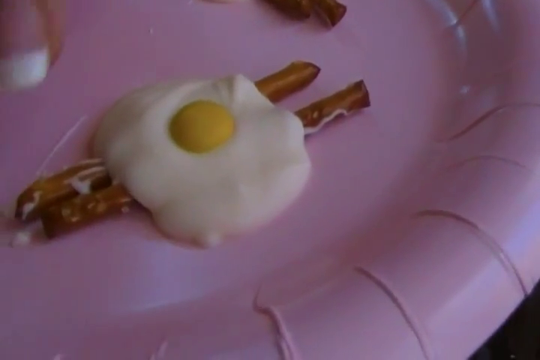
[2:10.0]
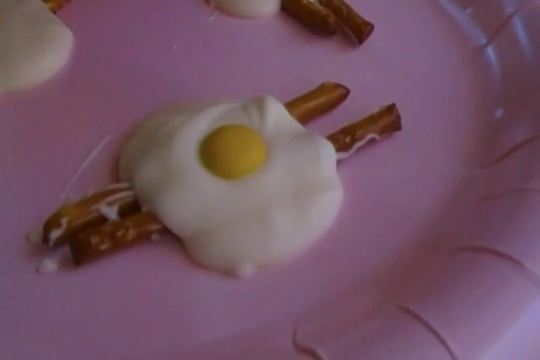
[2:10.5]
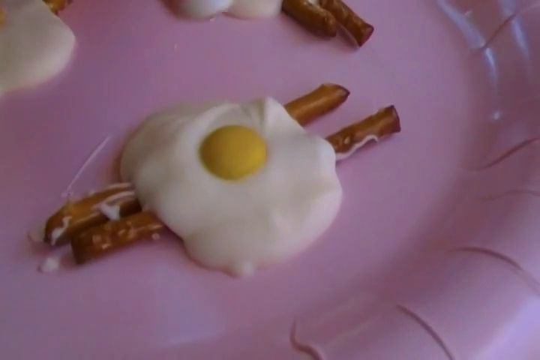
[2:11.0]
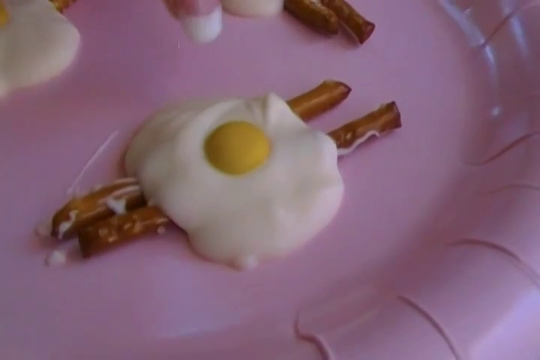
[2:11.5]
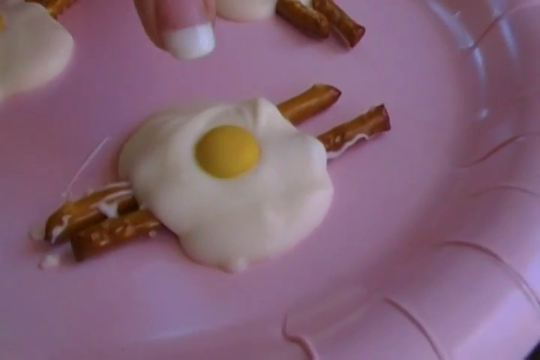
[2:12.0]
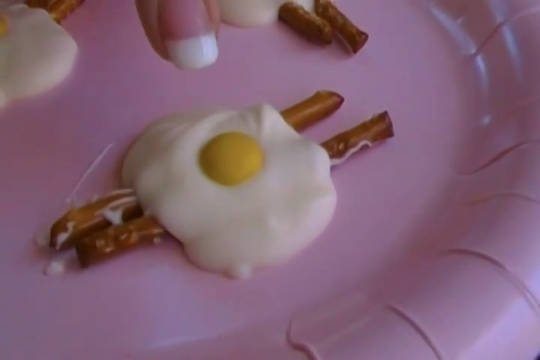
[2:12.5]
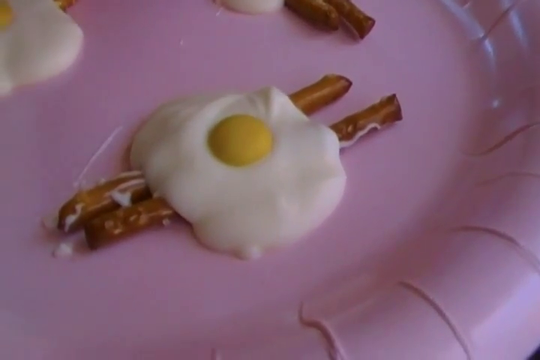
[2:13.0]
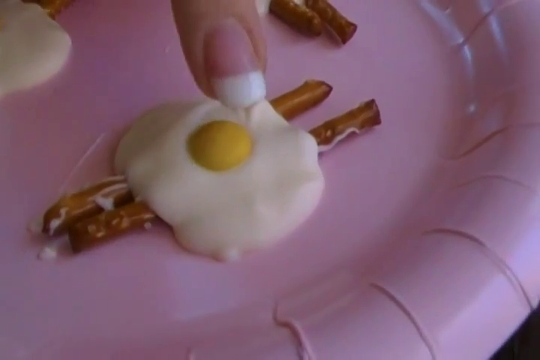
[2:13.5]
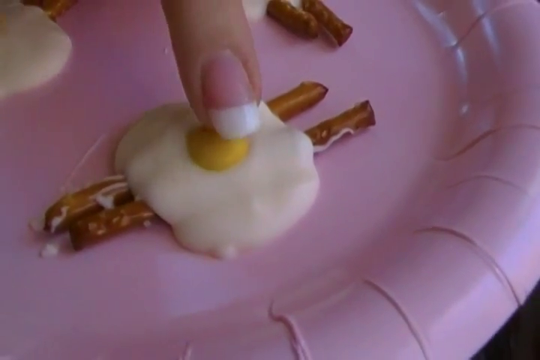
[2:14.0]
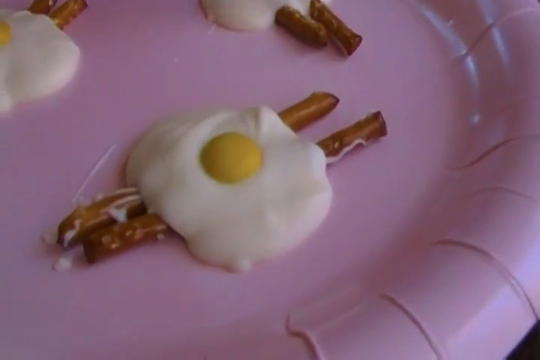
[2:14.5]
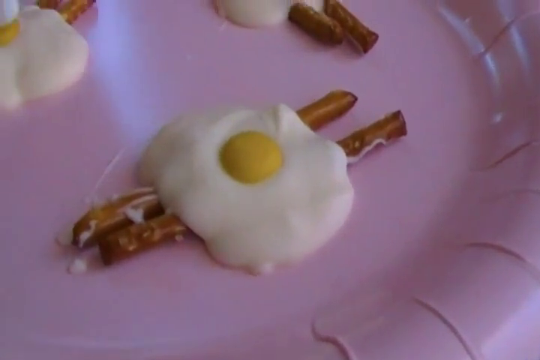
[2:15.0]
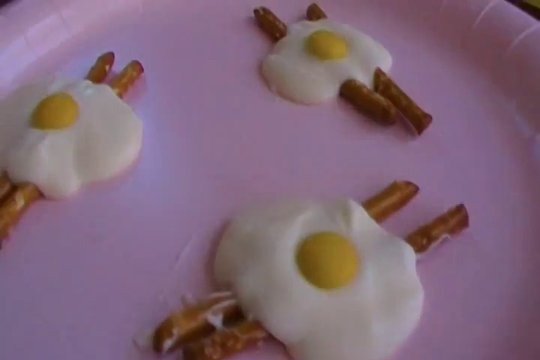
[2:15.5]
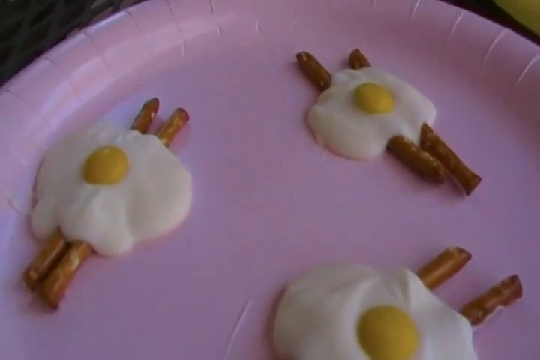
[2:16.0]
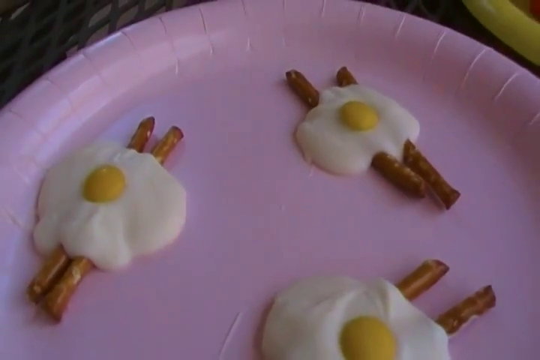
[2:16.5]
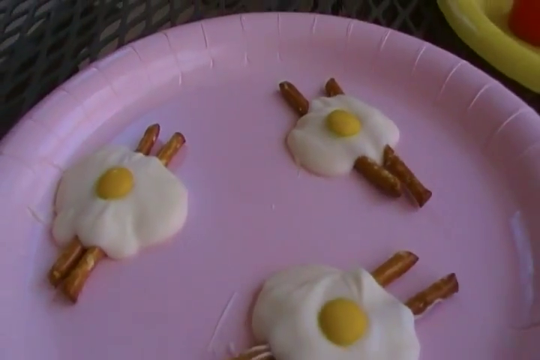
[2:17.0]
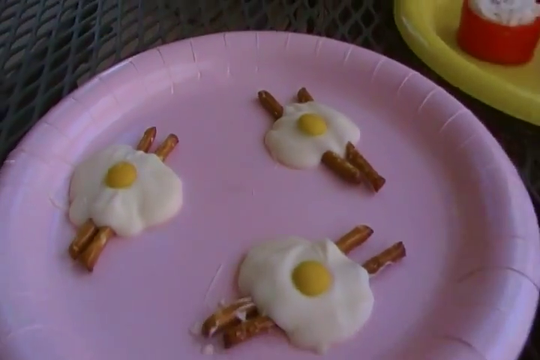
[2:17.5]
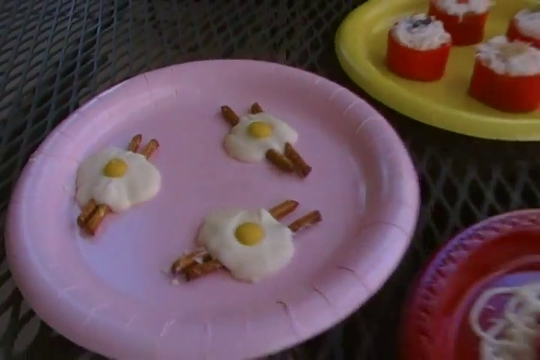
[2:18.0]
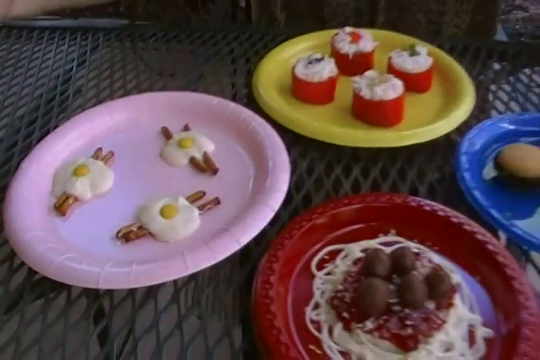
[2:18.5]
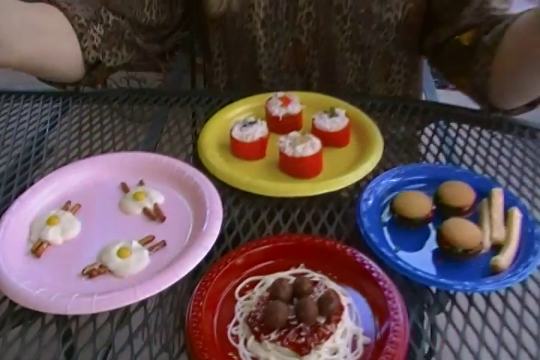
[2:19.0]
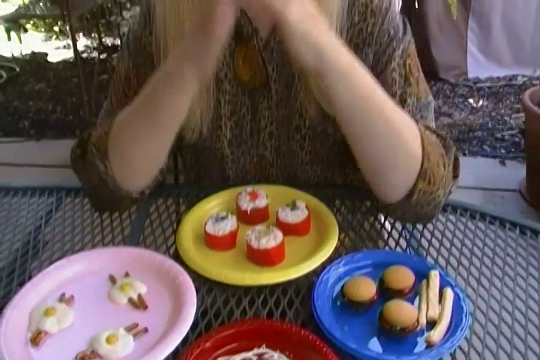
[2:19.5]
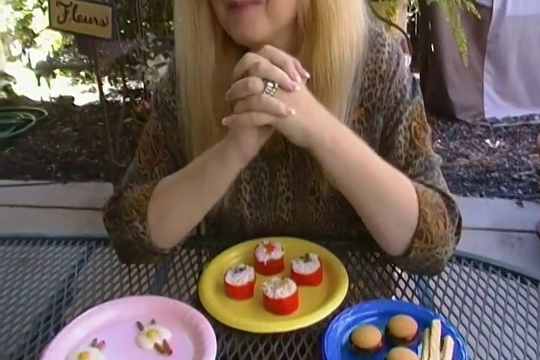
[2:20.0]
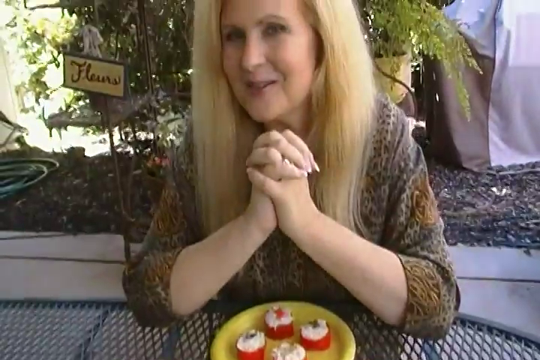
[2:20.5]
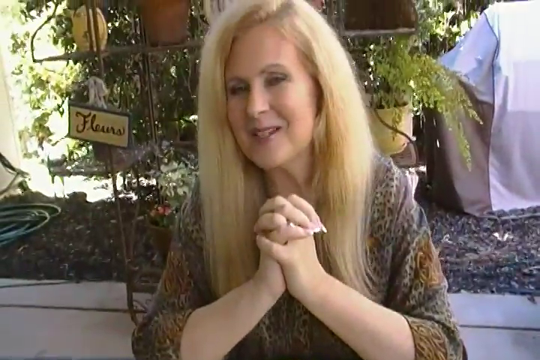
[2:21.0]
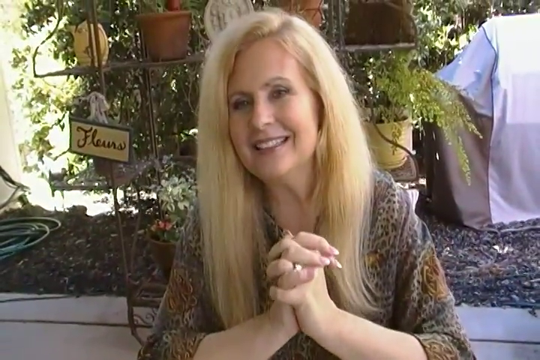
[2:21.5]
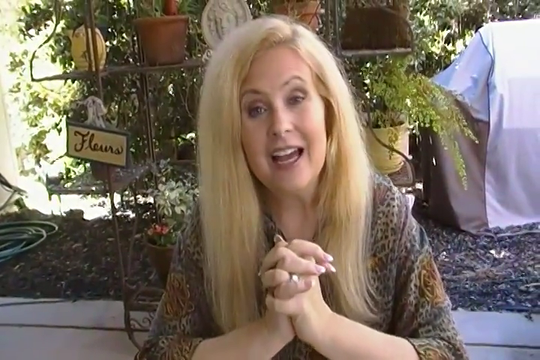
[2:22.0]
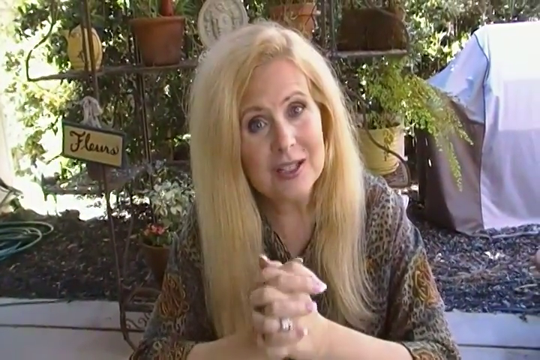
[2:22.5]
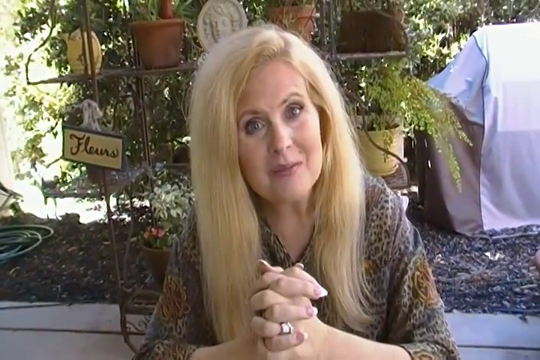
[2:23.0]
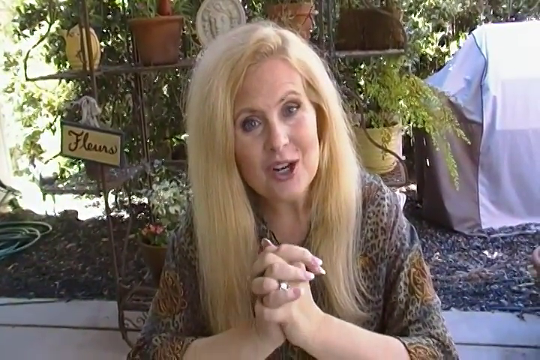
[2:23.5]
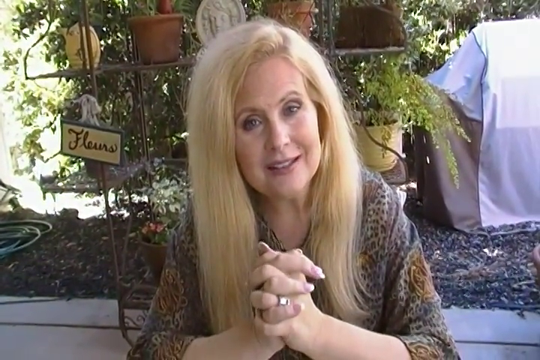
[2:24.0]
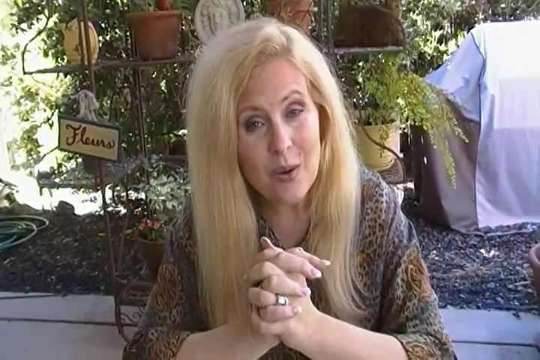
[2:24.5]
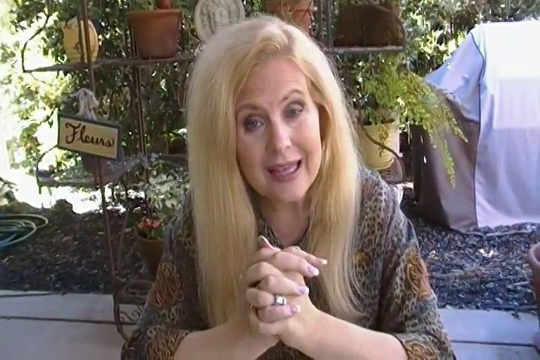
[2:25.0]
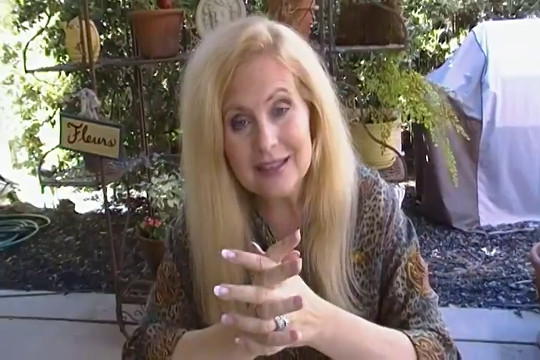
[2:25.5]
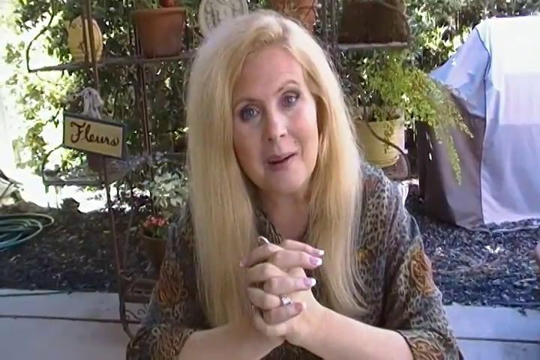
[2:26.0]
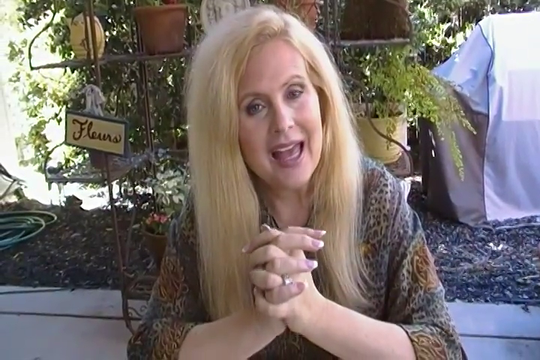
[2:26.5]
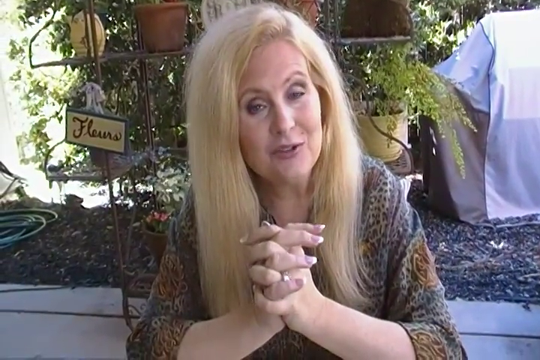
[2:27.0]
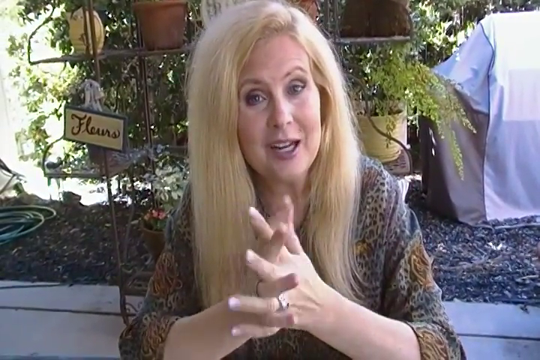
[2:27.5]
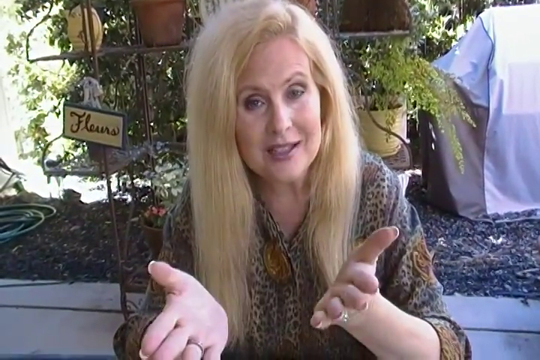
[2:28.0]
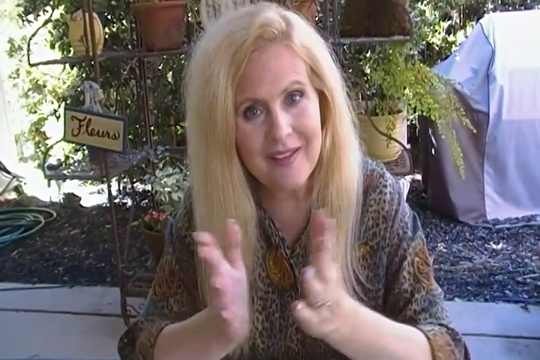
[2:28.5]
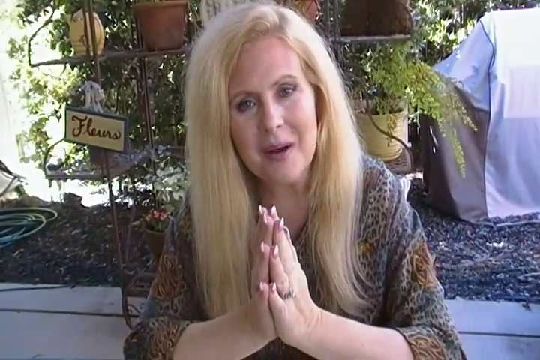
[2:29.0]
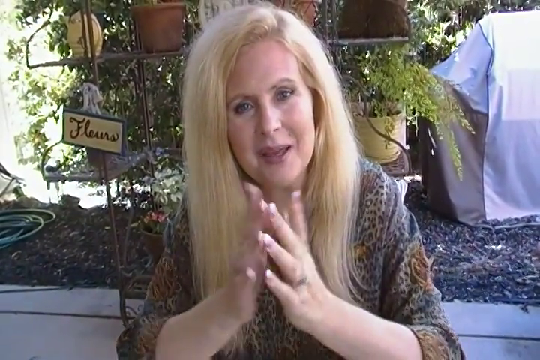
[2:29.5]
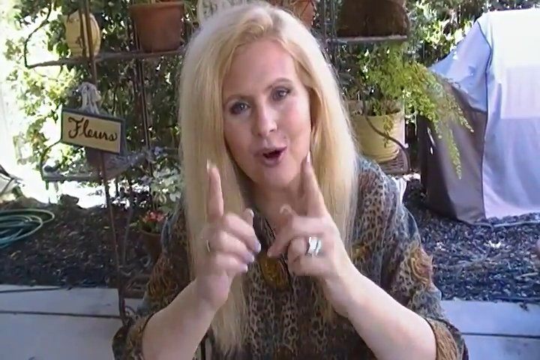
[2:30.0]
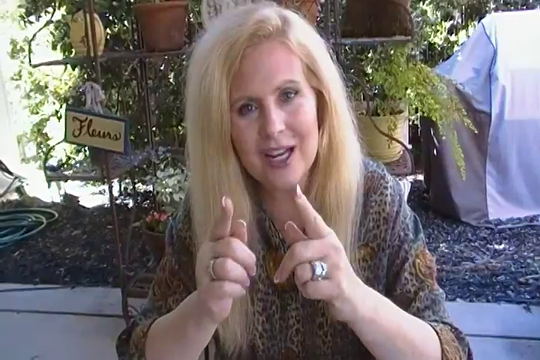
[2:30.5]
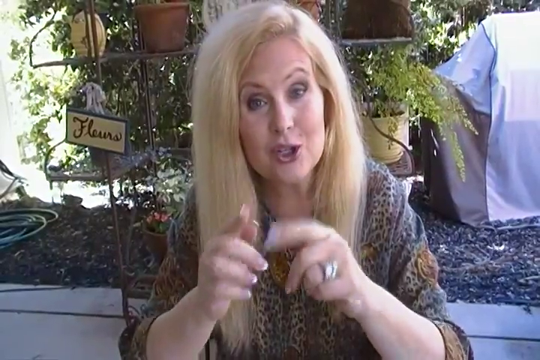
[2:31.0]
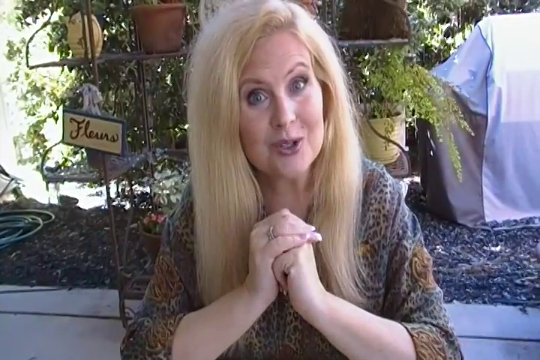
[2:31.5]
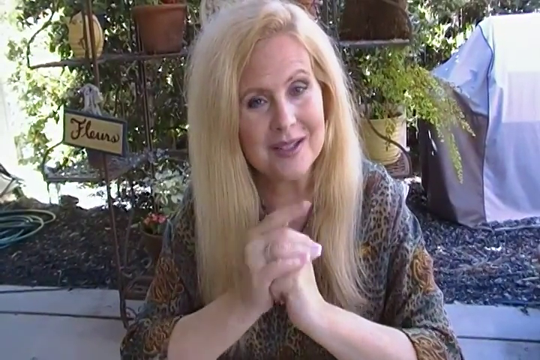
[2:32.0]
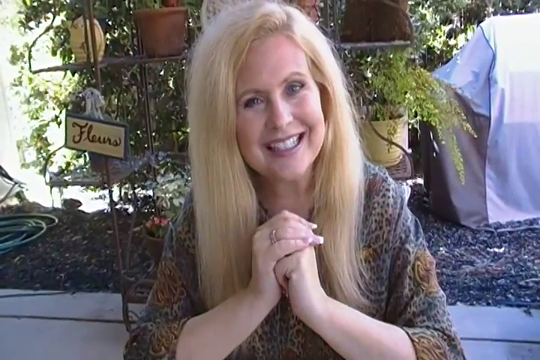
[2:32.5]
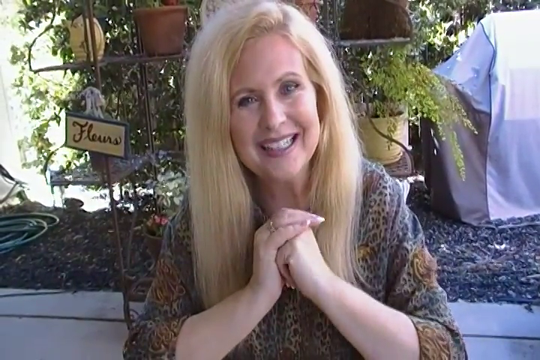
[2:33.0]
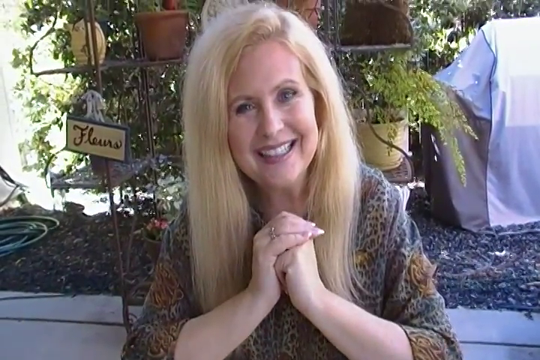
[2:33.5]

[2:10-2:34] The camera zooms in very close on the spaghetti, which looks very different from regular eggs. When the woman finishes speaking about it, the camera zooms out so her face is clearly visible again, as at the beginning, and she speaks about what she made. She then smiles at the camera and the video ends. The dishes were made by hand and look very time-consuming.